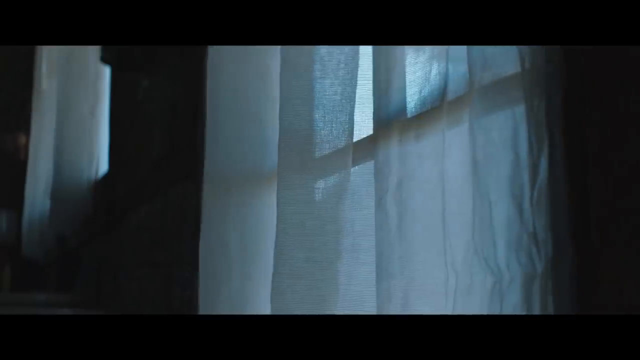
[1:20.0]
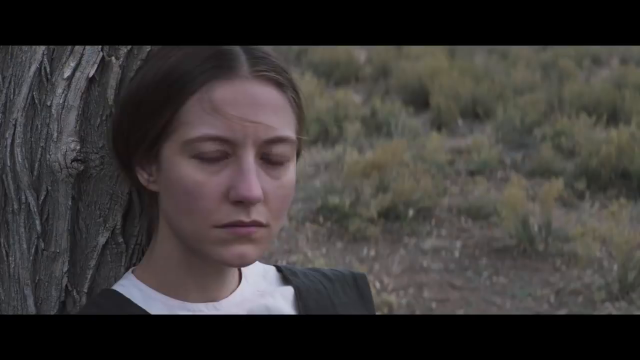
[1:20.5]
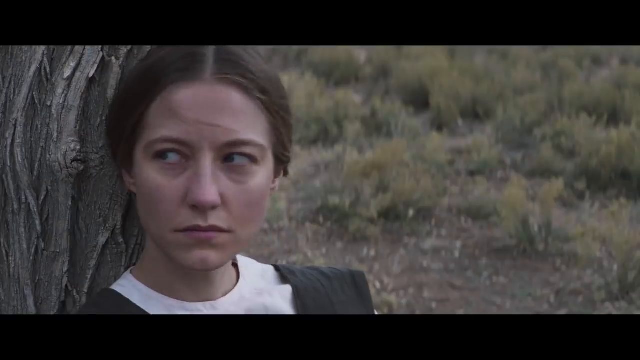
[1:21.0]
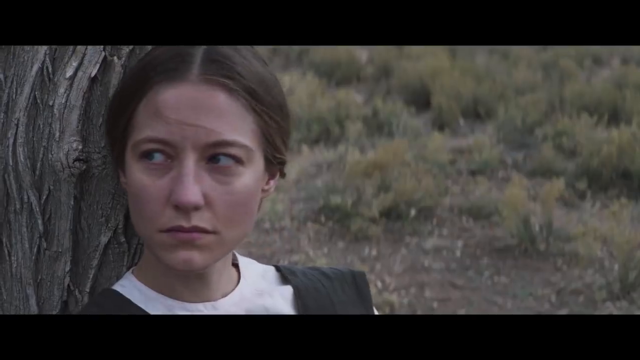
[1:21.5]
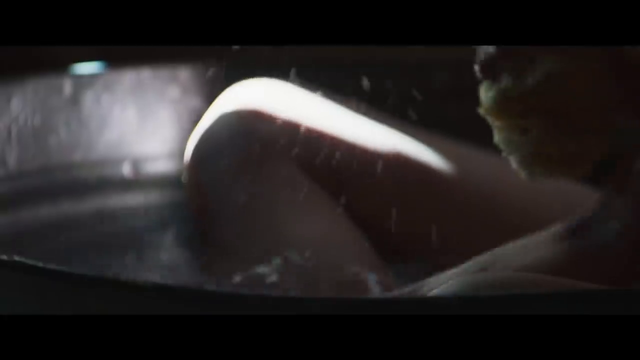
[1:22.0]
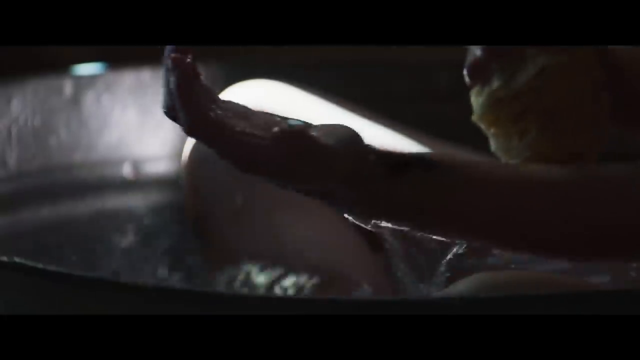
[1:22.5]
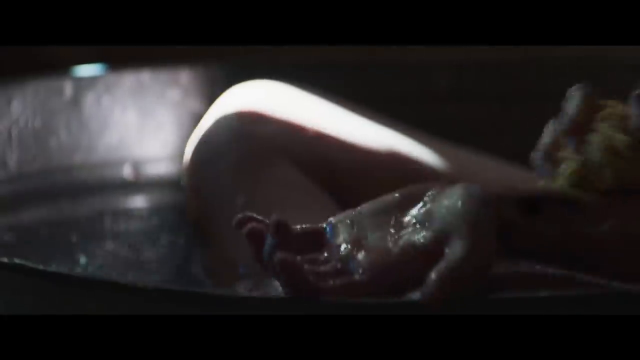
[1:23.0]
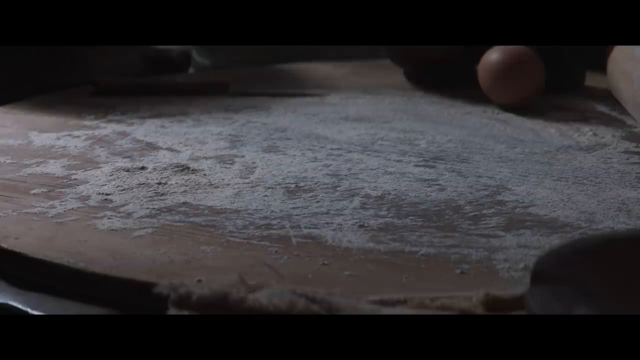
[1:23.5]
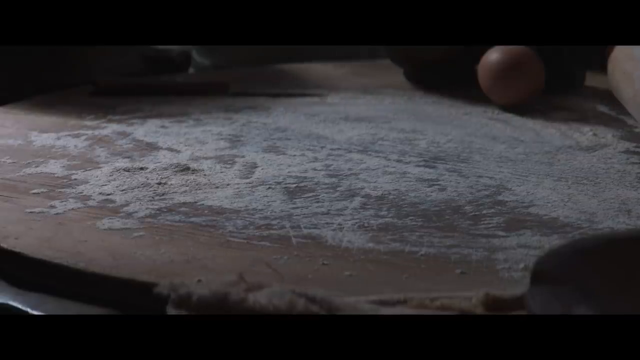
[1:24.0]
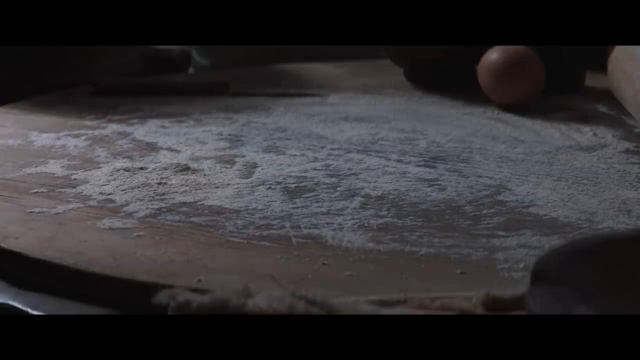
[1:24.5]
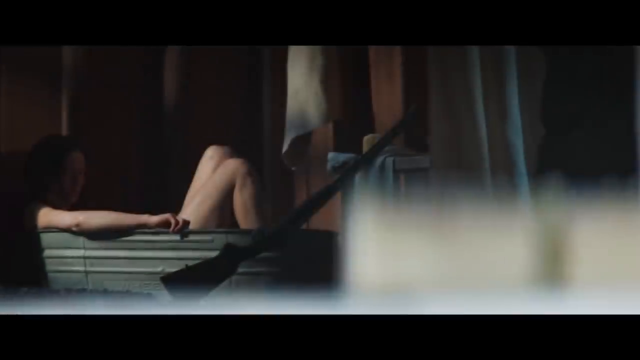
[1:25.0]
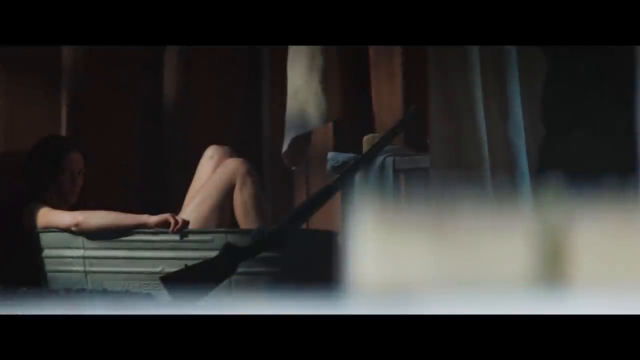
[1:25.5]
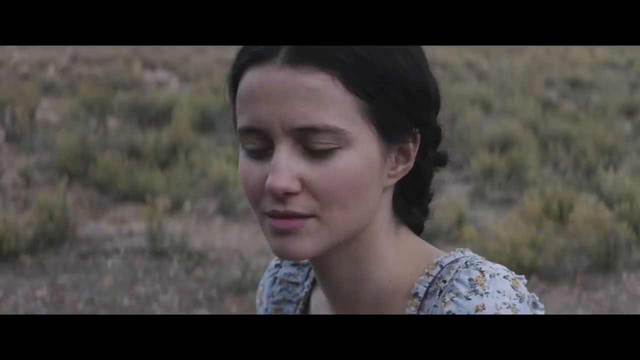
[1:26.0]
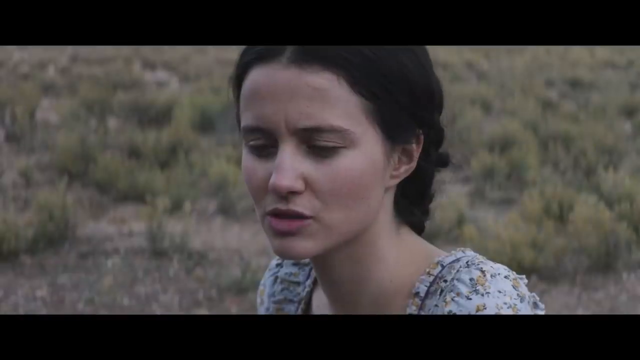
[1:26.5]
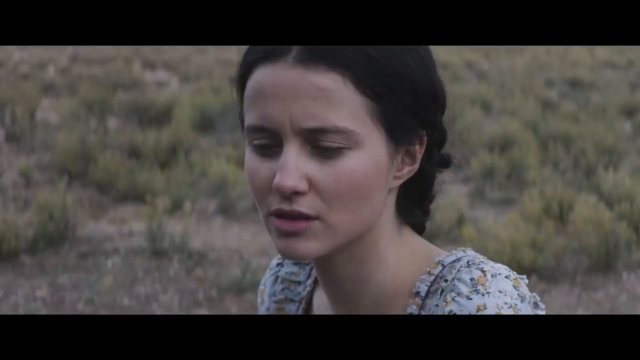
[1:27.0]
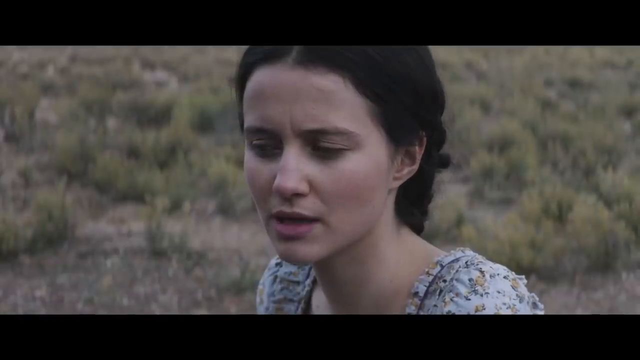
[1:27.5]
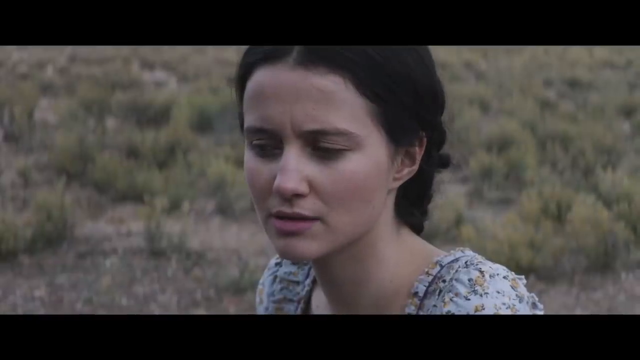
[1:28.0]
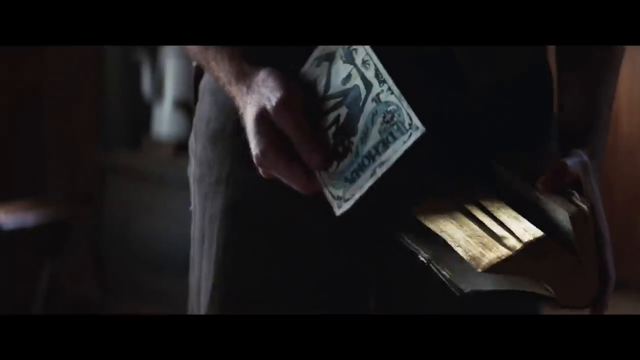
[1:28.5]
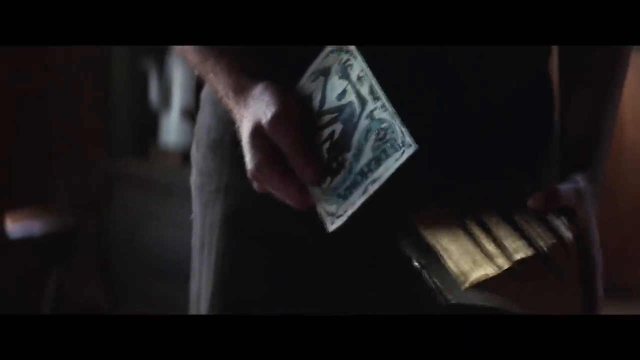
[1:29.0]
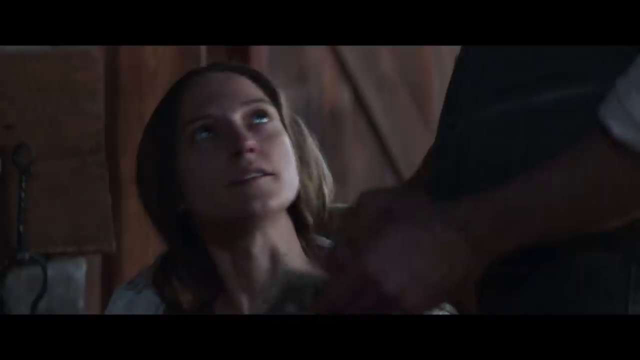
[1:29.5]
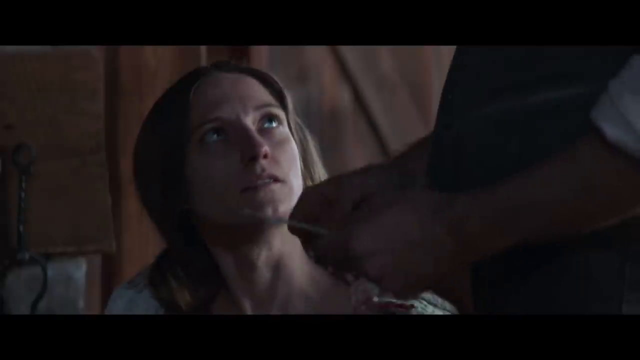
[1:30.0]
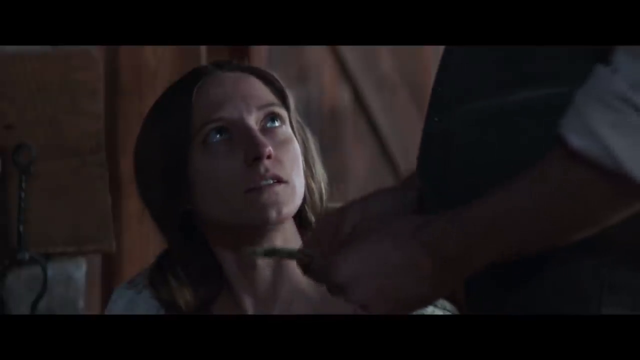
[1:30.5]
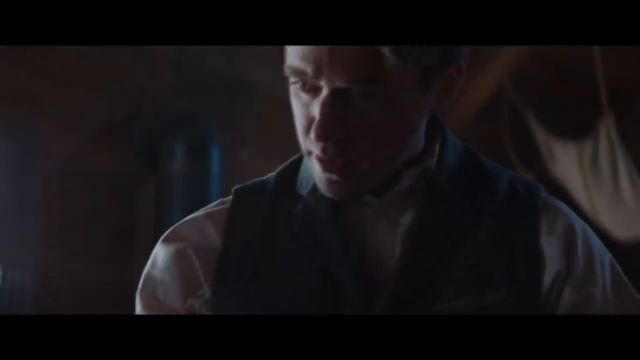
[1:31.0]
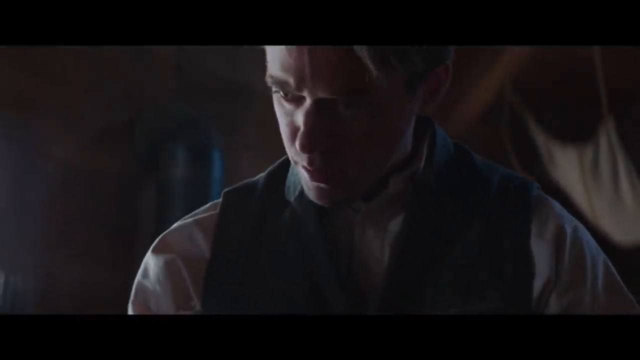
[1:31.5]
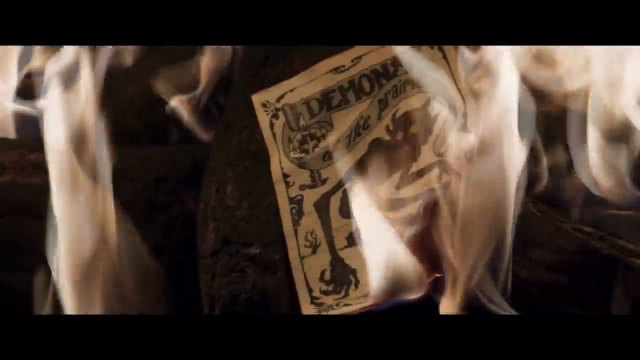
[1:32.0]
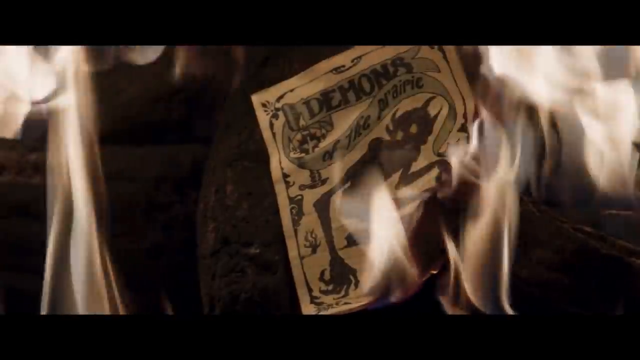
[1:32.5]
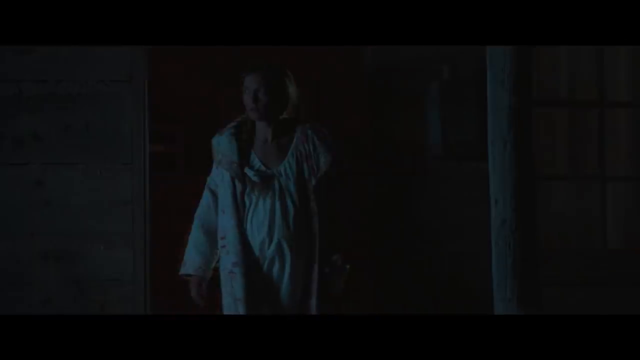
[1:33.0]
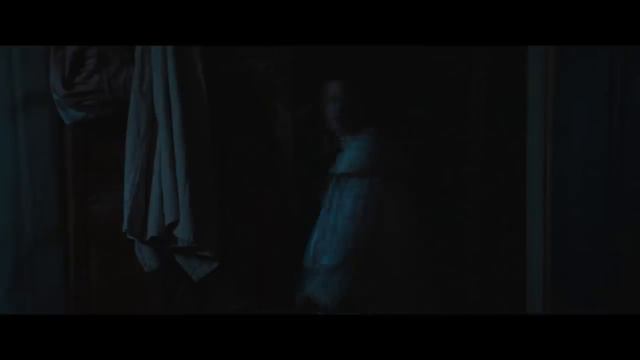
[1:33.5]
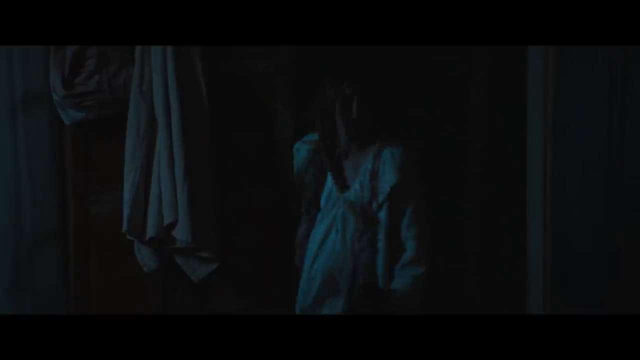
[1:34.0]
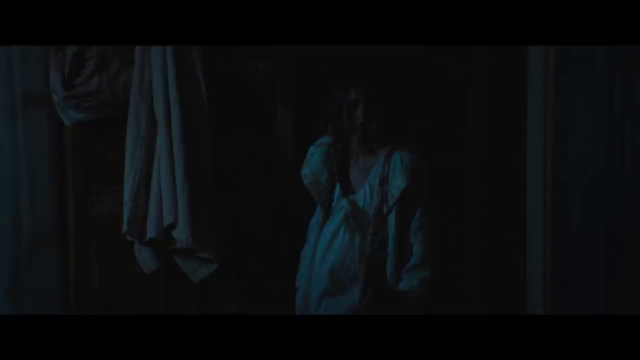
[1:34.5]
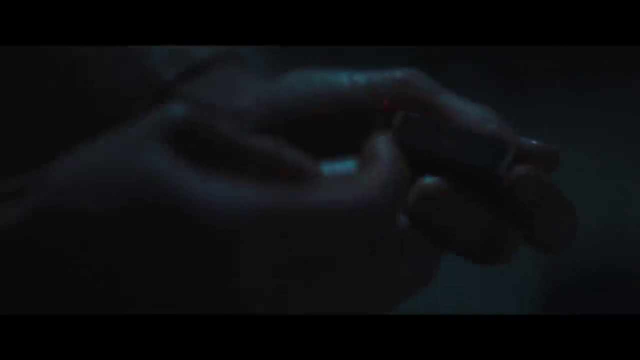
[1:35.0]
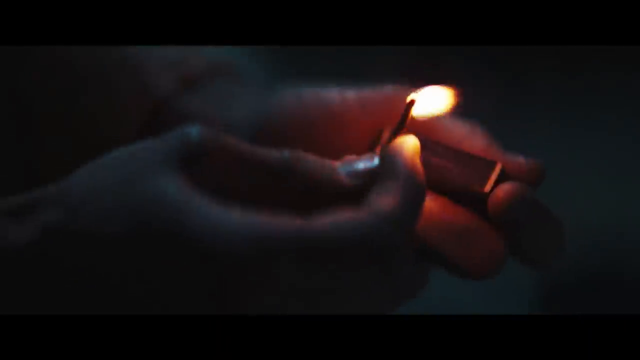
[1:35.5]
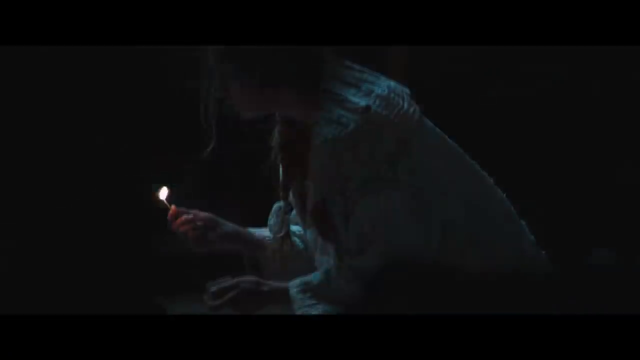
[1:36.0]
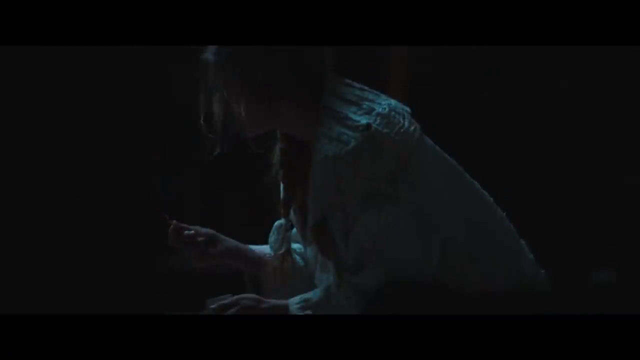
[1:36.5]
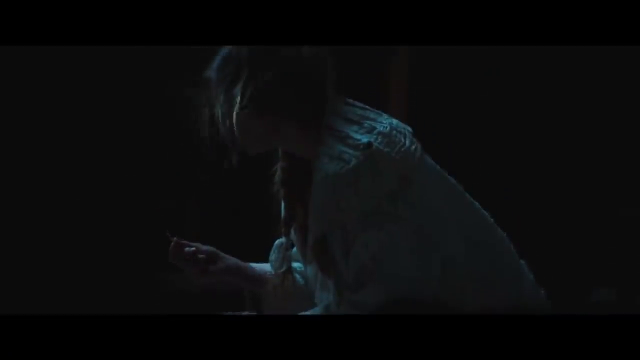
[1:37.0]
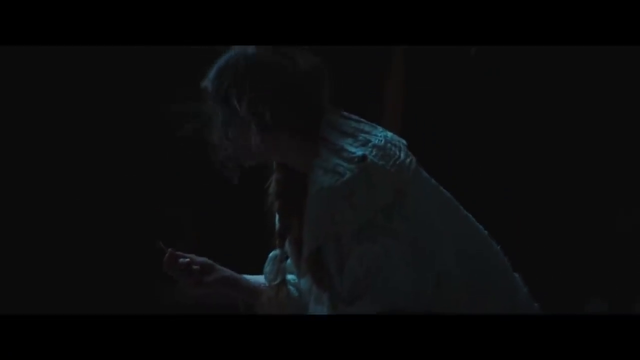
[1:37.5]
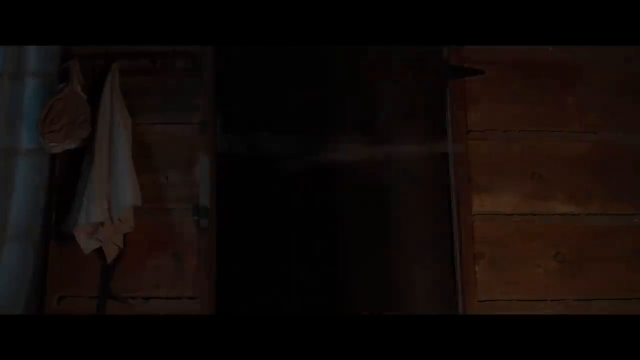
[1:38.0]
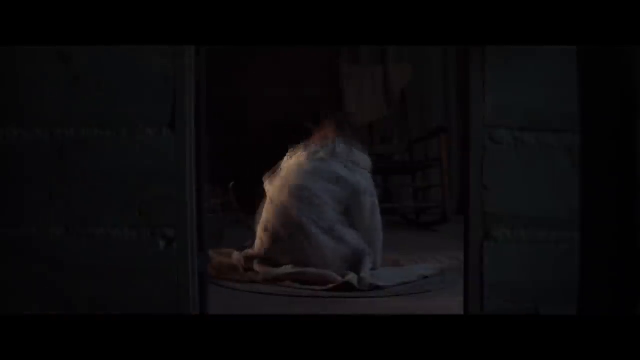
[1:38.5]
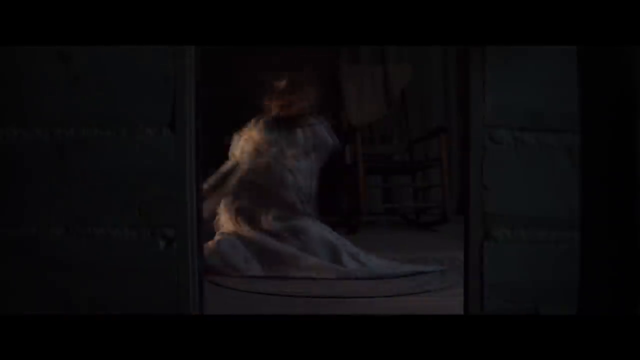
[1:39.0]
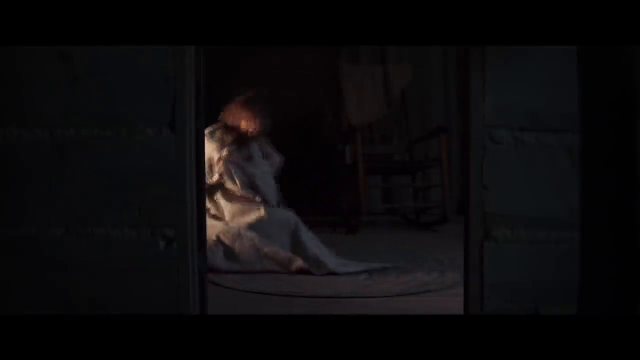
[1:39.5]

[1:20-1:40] The lighter-haired, brown-haired woman sits in front of a tree, somewhat leaning against it, with grass in the background. A hand is in water; it looks like someone is scrubbing themselves. Apparently one of the women is in a metal tub, taking a bath or something. The darker-haired, brown-haired woman sits in the grass with rosy cheeks, pink lips and a floral dress, and seems to be talking. Someone picks up a card with the demon of the prairie on it, which looks like it came out of a book. The demons of the prairie card or page is then burned in the fire. The woman in the cabin is standing there, and then it looks like the lights go off. She looks around frantically and lights a match, which goes out. A door swings open; she is terrified, spins around and looks at the door, and there is nothing there.